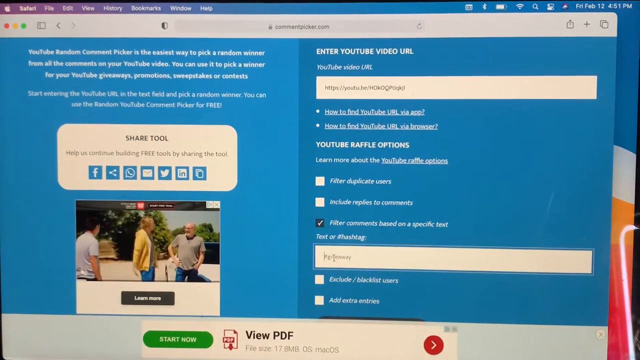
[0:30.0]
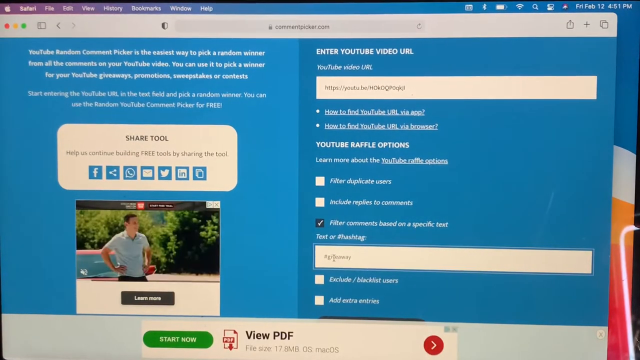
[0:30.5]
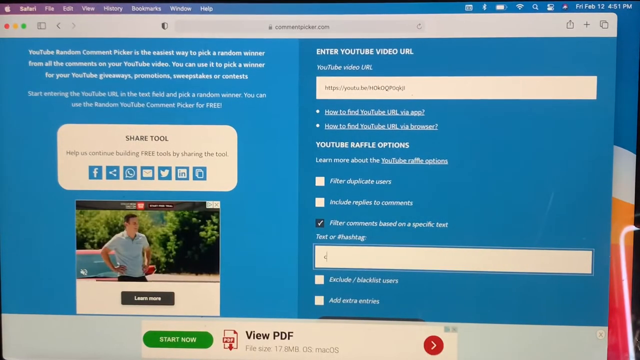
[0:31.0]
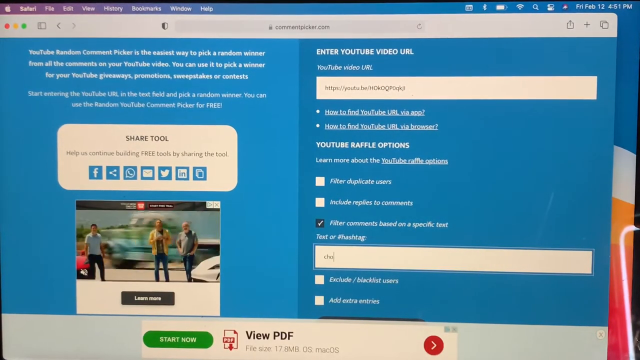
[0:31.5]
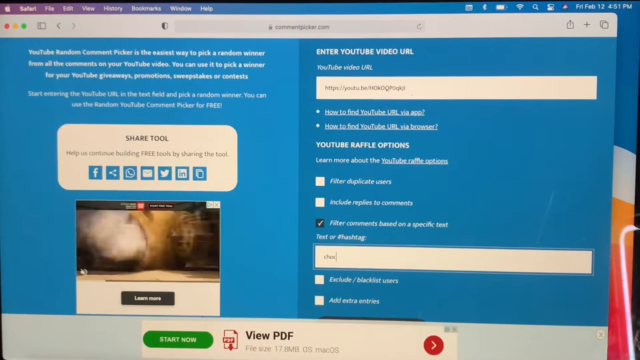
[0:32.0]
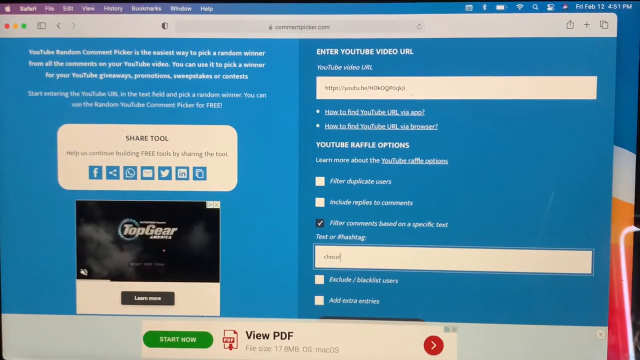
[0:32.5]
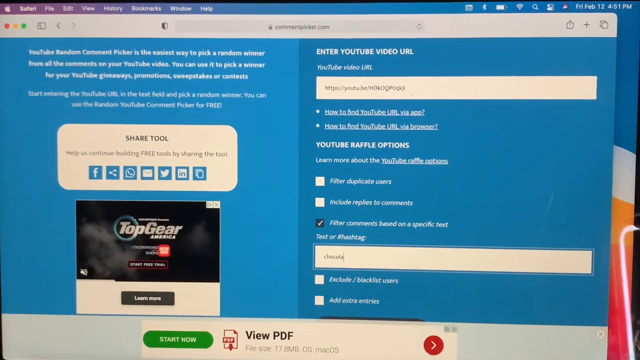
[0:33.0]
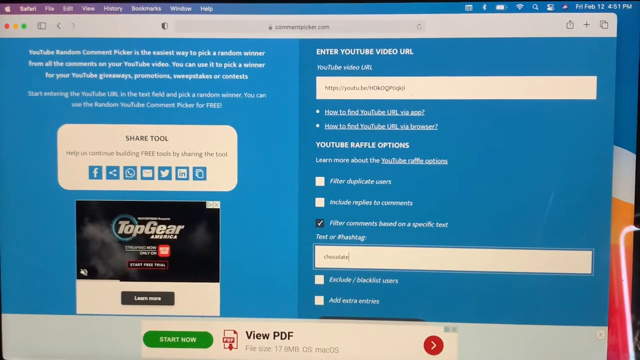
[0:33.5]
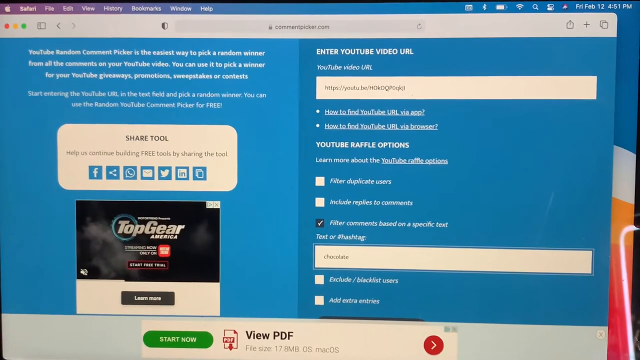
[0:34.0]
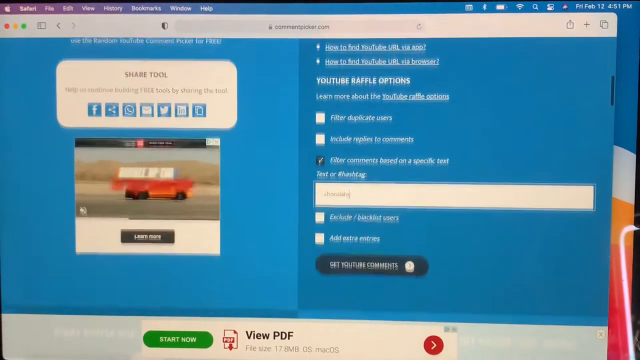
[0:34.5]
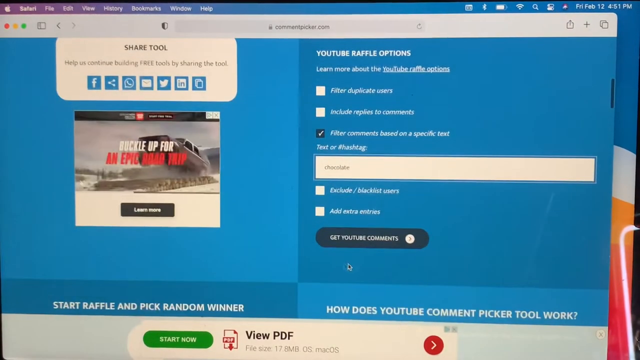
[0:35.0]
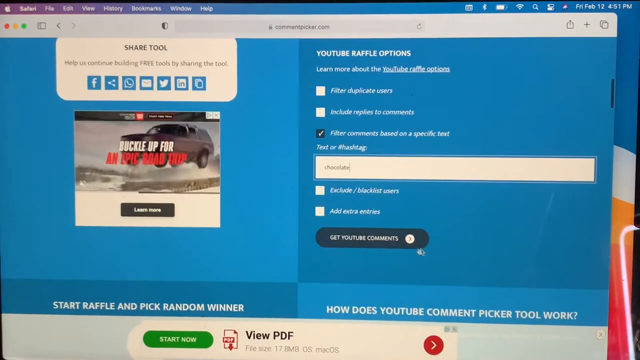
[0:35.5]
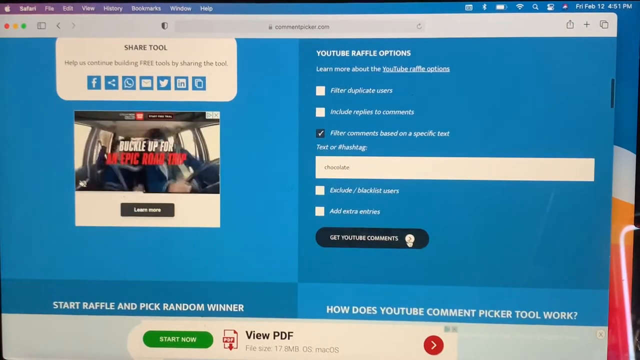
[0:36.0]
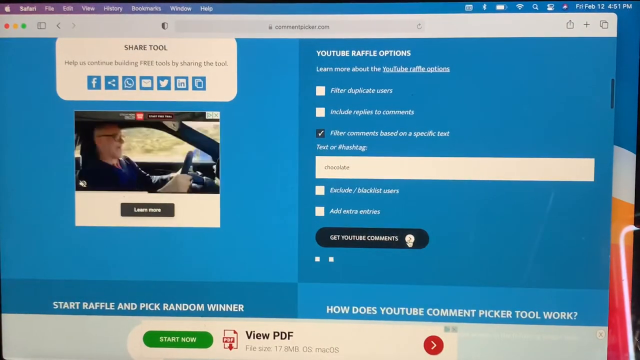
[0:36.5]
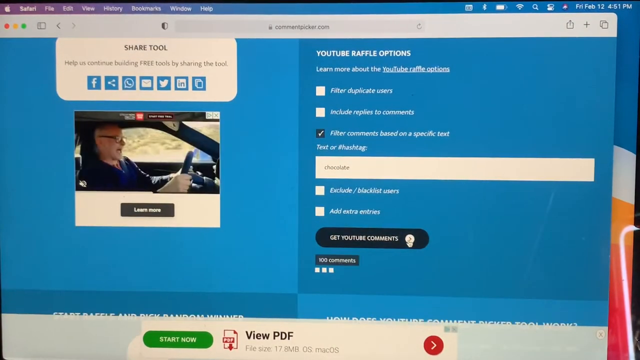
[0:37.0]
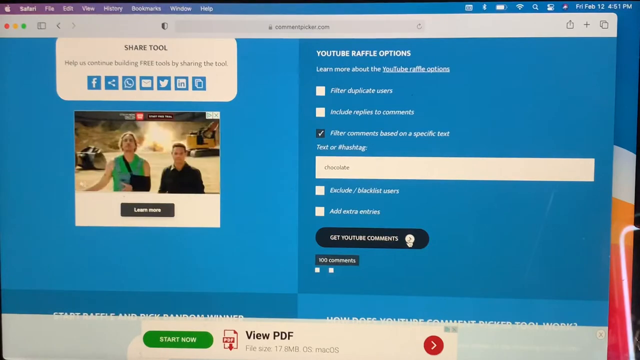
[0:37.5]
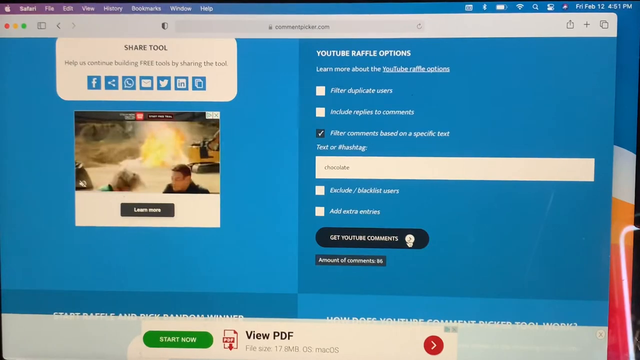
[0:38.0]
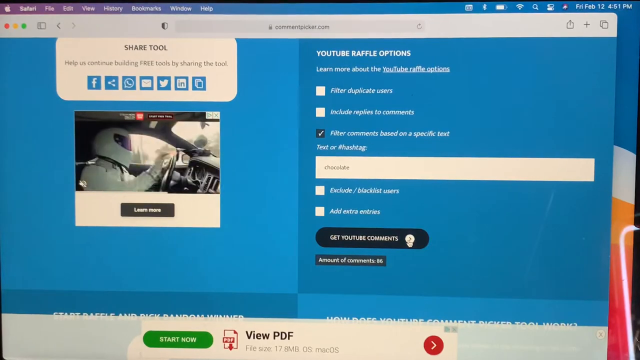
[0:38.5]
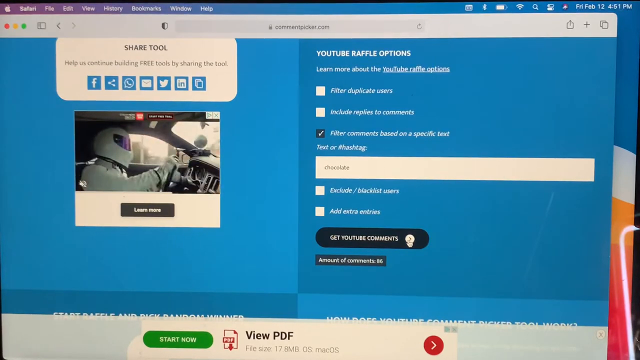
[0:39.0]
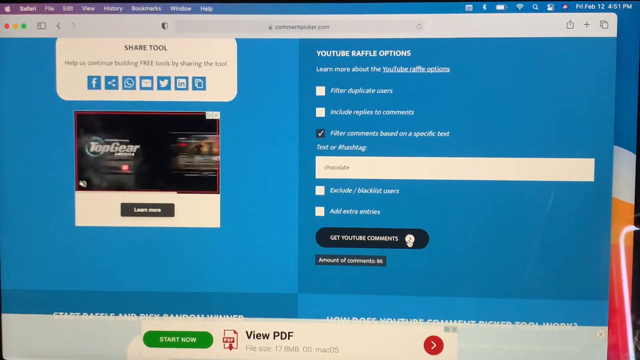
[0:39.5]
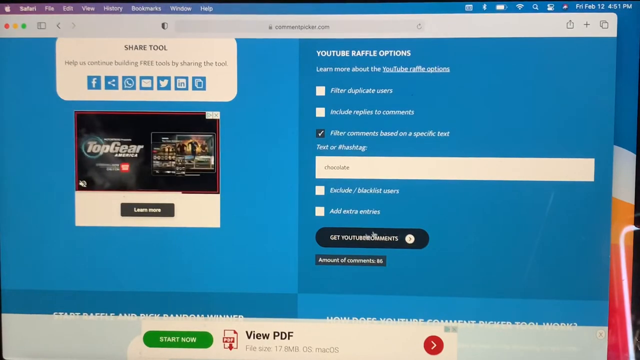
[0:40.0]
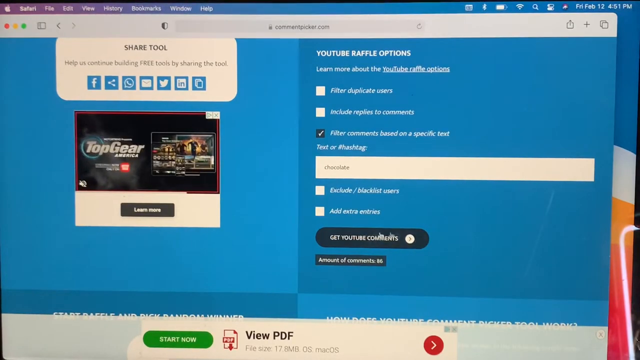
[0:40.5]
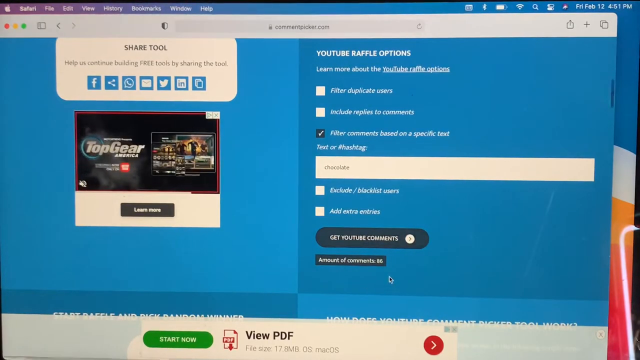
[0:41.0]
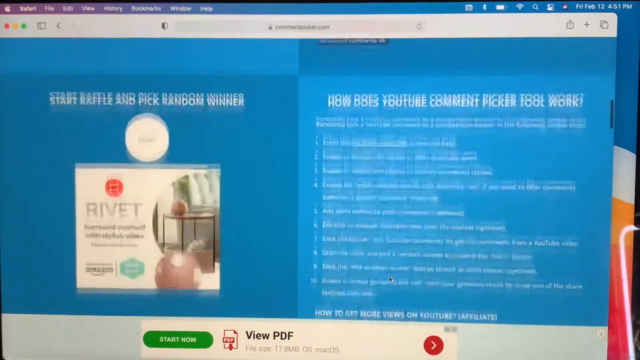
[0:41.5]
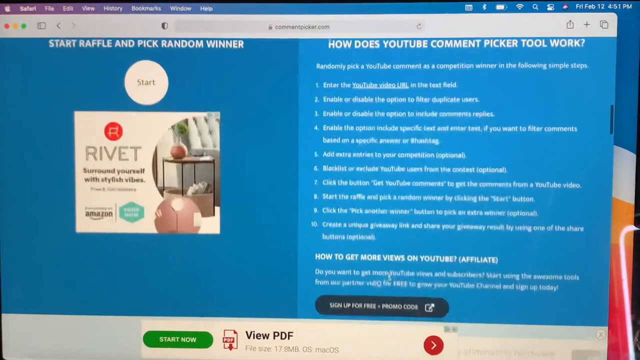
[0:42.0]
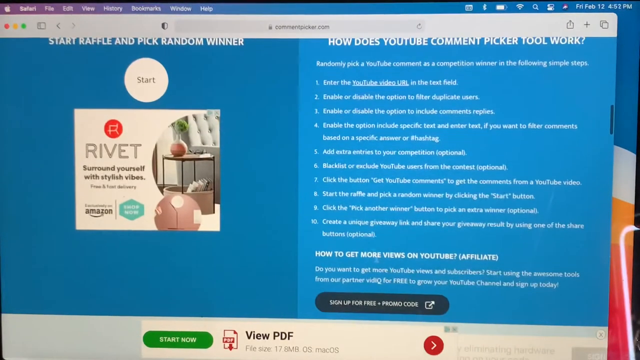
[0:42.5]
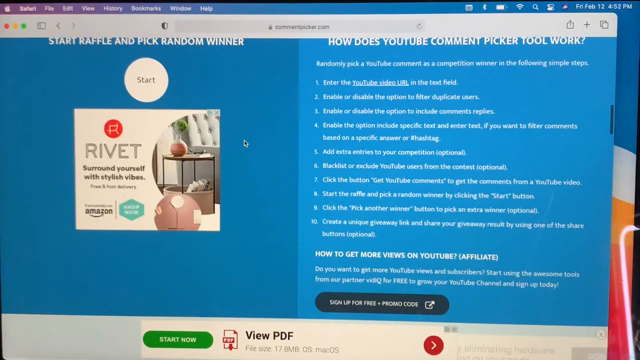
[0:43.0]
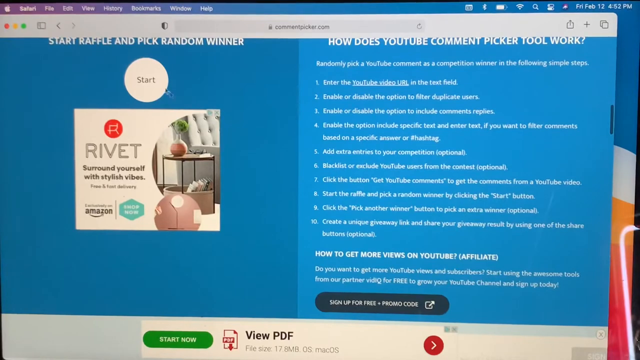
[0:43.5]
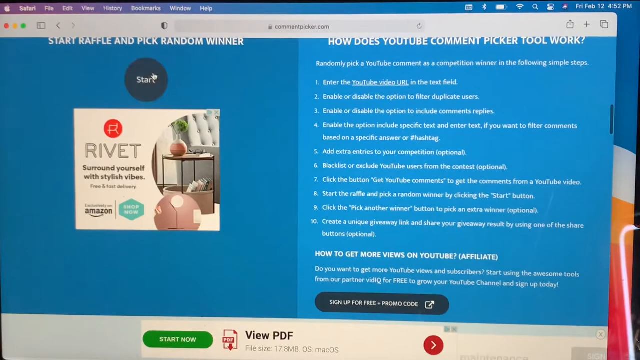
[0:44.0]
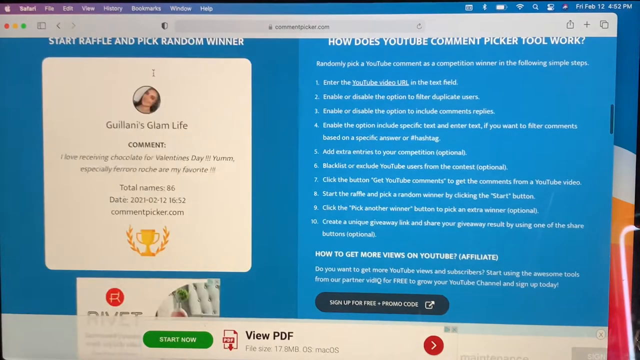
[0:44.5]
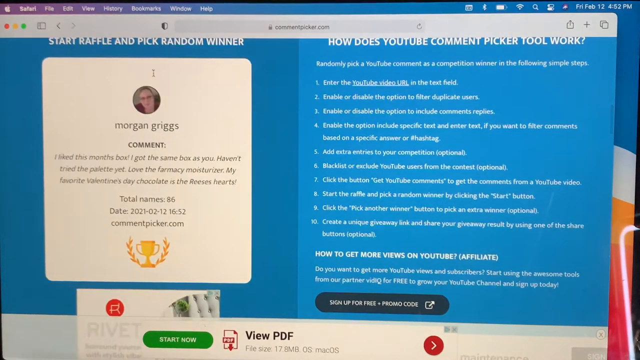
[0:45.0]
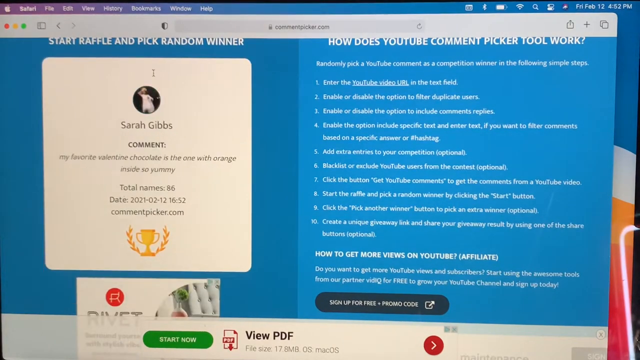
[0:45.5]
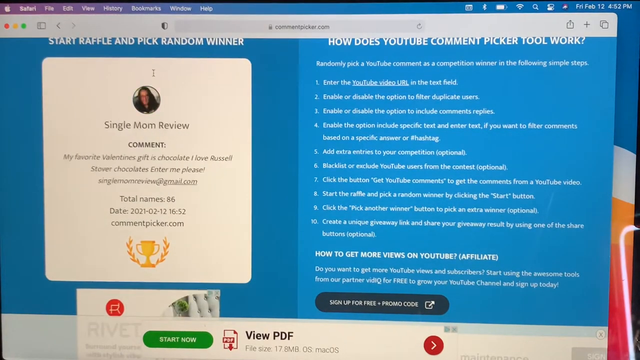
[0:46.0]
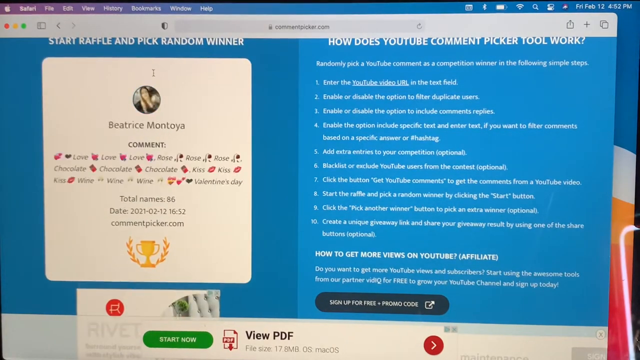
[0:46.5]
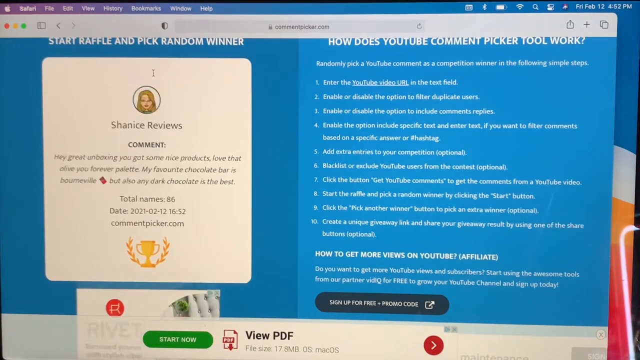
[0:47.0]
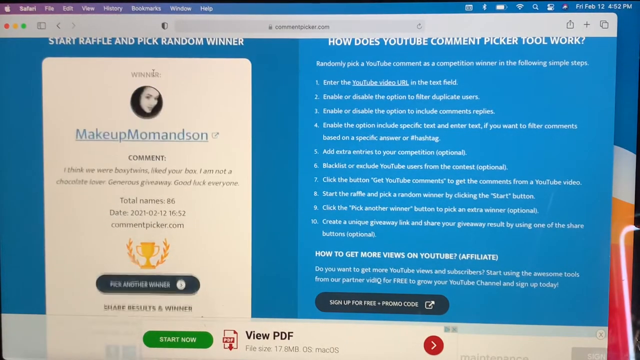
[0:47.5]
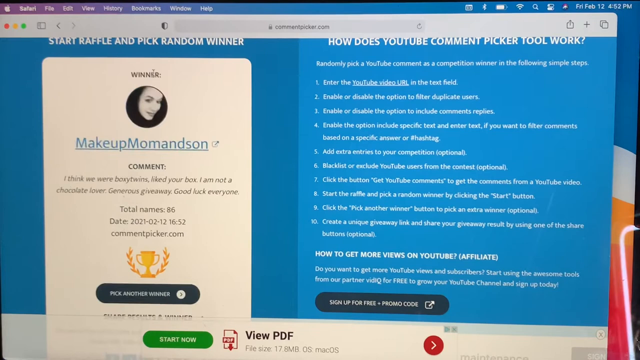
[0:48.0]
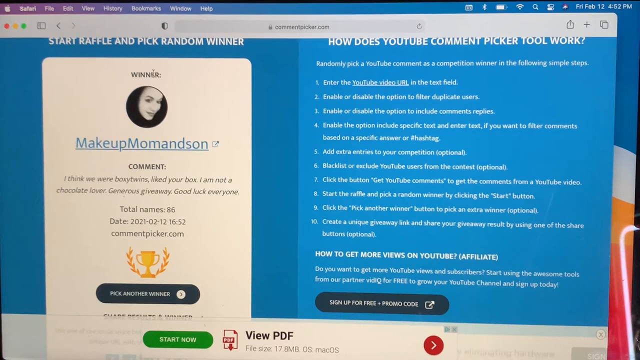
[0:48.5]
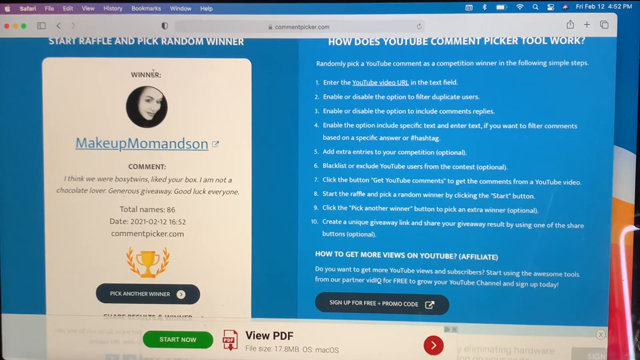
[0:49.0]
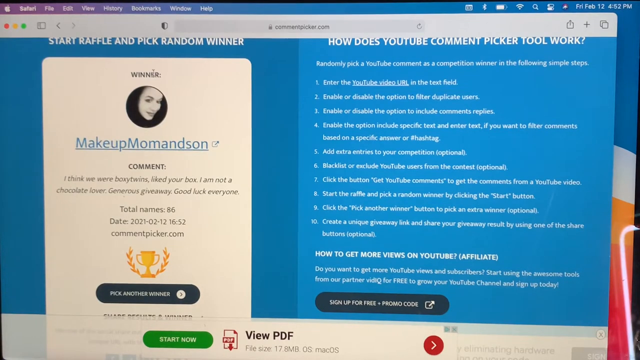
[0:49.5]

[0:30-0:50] The browser on the Apple computer still appears to show commentpicker.com at the top, on a blue webpage with a lot of white text and input fields on the right side. The checkbox for "filter comments based on a specific text" appears to be checked, and "chocolate" is typed in. The cursor moves down and clicks a button that reads "get YouTube comments." After a brief pause, a rectangle that looks black or gray appears with white text reading "amount of comments, 86." The cursor makes a small counterclockwise circle around it, then the page scrolls down to more white text, and at the bottom on the left side is "start raffle and pick random winner." The cursor clicks a circular start button that is white, turning gray when highlighted. A white rectangle appears and scrolls through many profile pictures, finally stopping on "winner" with a profile picture of a woman's face and the name "make up mom and son." The cursor moves to and hovers over "make up mom and son."